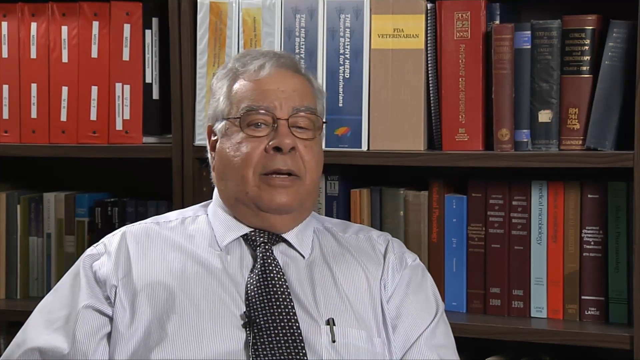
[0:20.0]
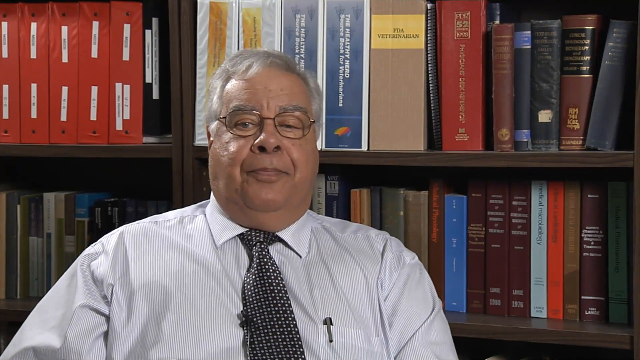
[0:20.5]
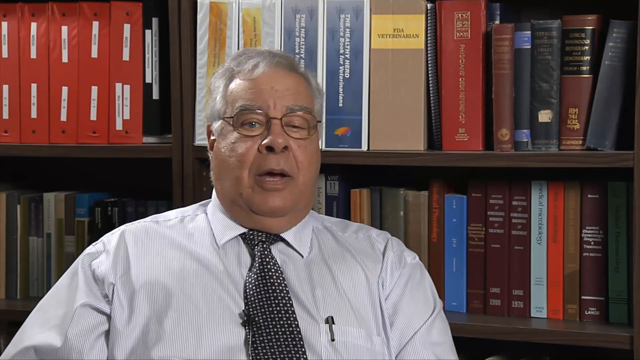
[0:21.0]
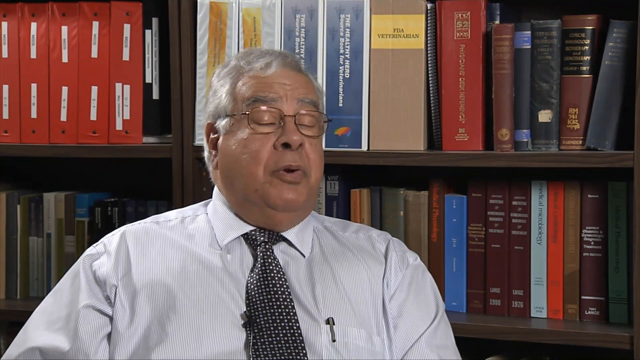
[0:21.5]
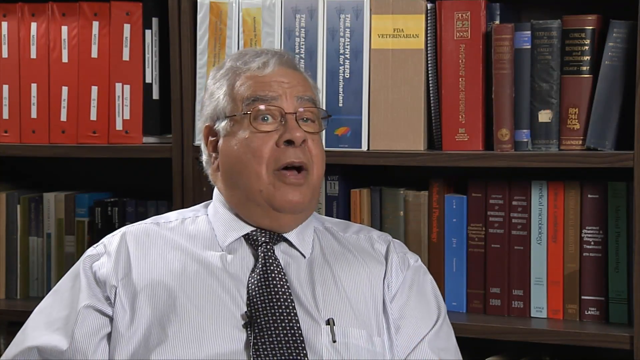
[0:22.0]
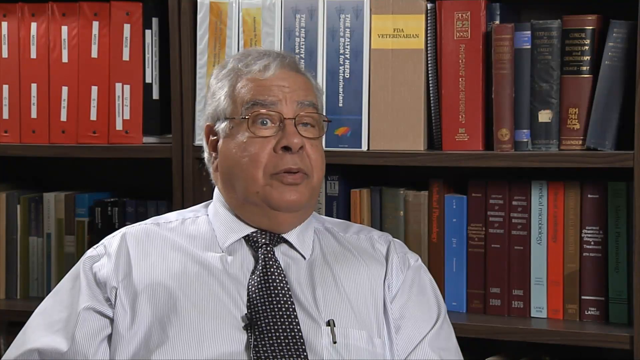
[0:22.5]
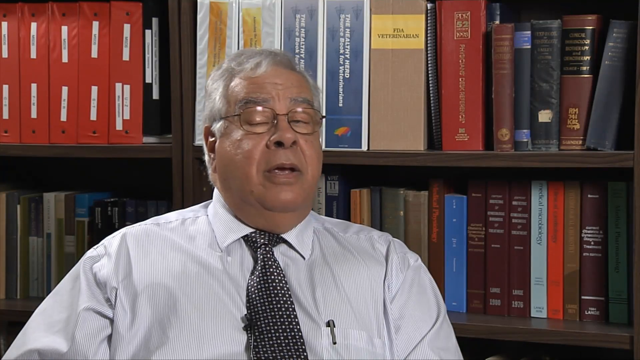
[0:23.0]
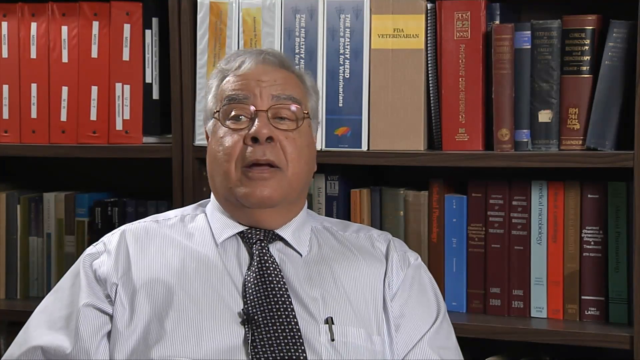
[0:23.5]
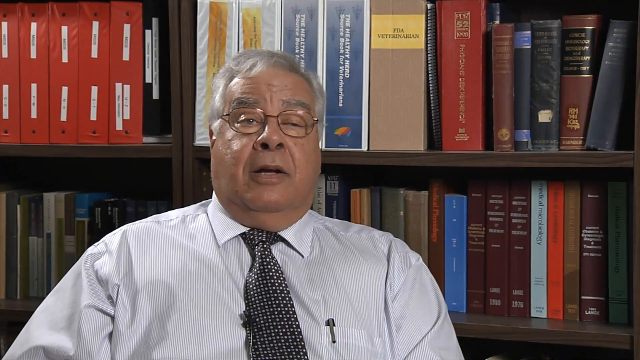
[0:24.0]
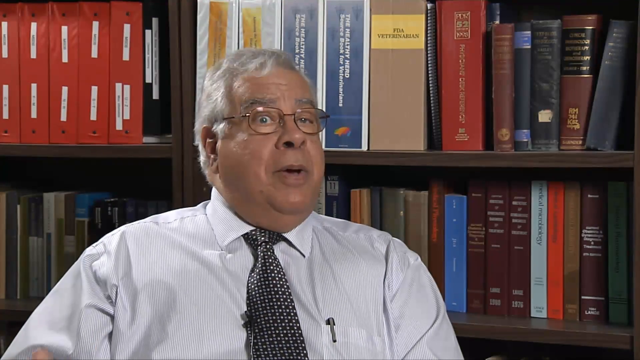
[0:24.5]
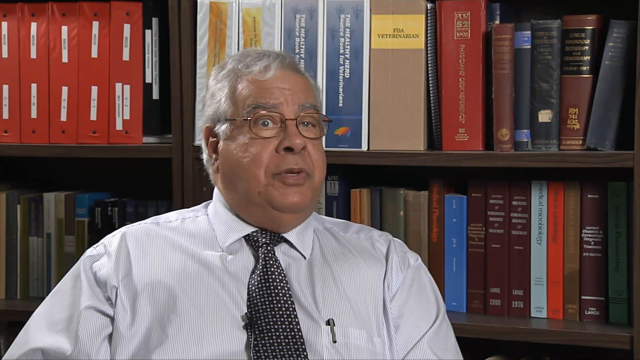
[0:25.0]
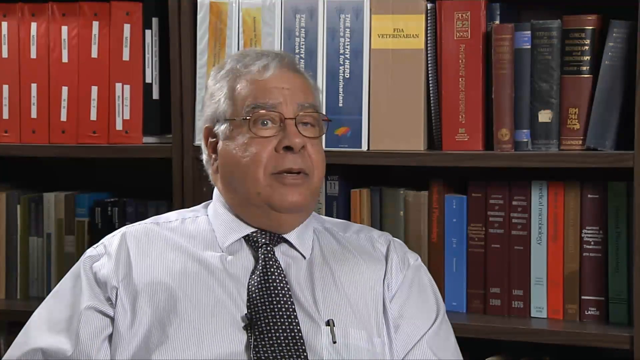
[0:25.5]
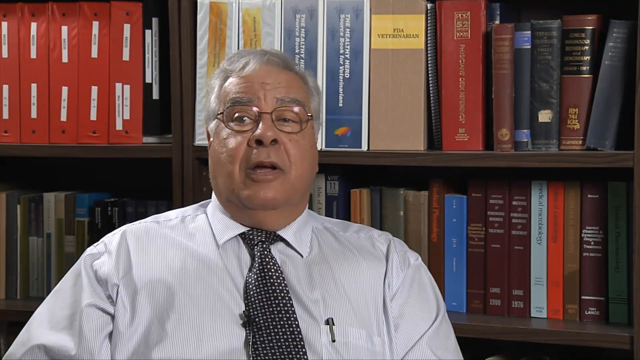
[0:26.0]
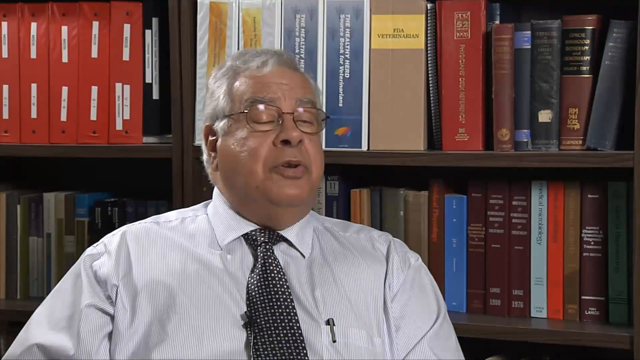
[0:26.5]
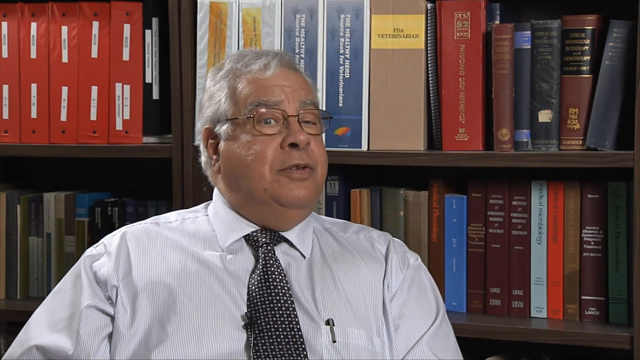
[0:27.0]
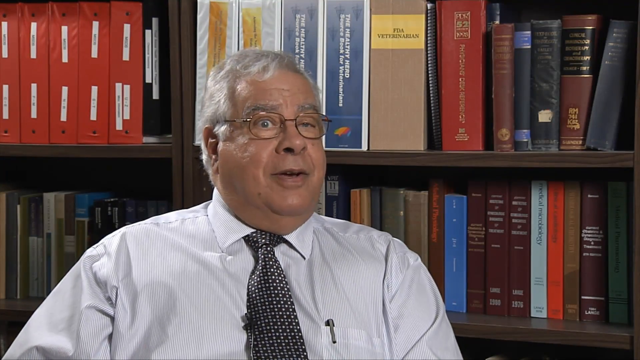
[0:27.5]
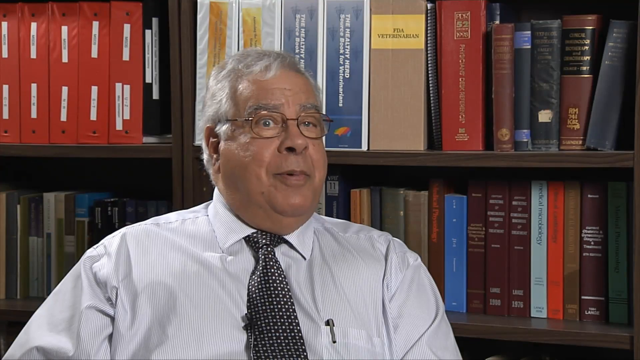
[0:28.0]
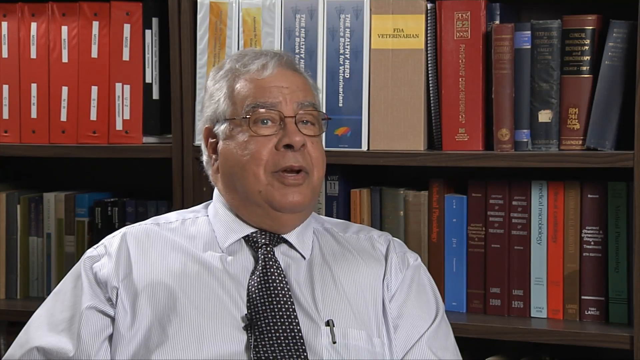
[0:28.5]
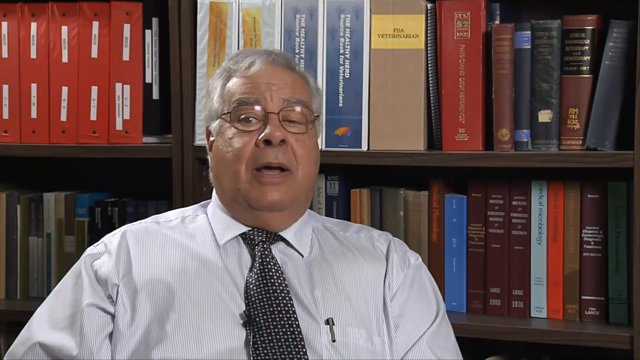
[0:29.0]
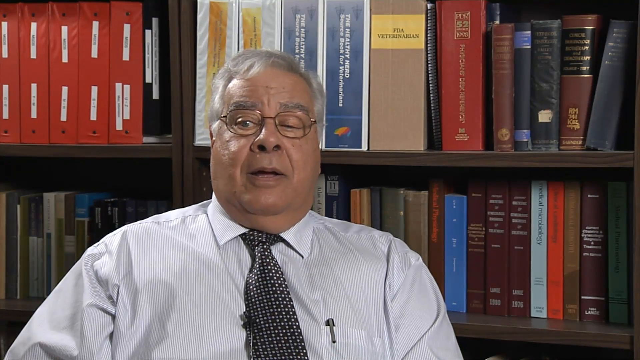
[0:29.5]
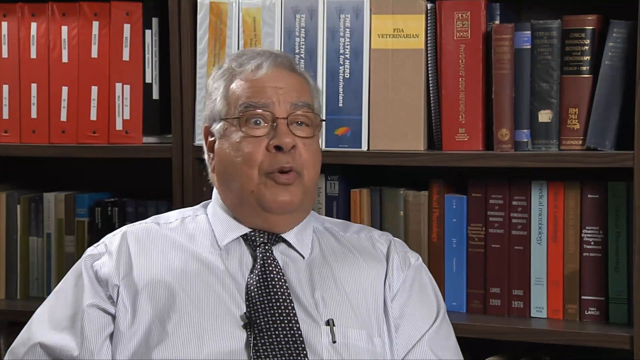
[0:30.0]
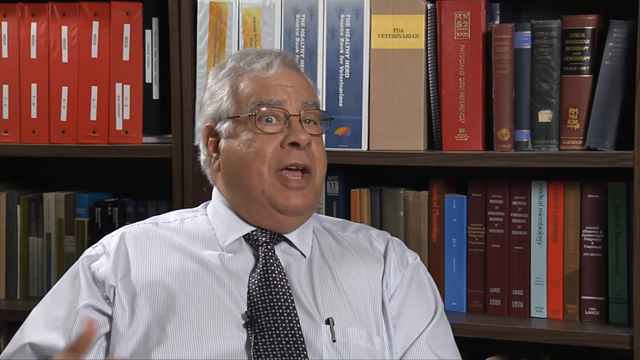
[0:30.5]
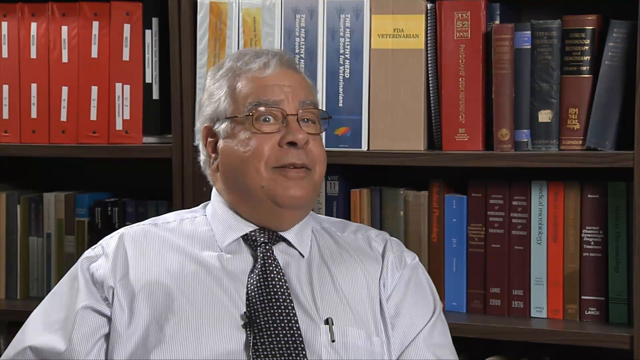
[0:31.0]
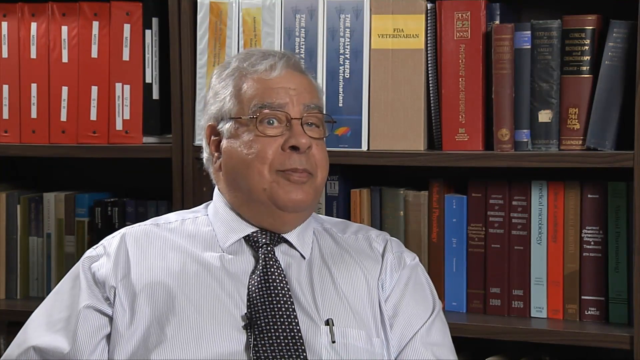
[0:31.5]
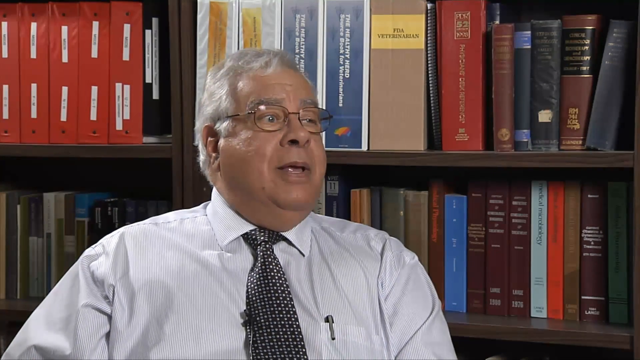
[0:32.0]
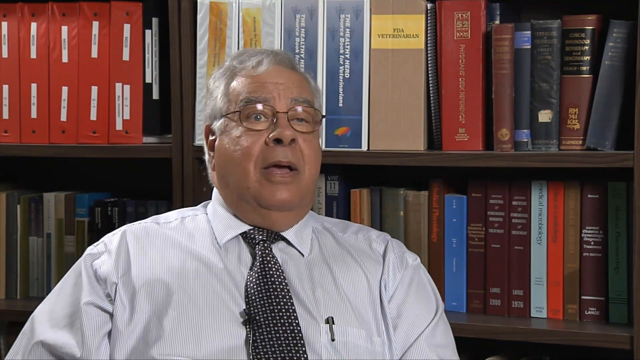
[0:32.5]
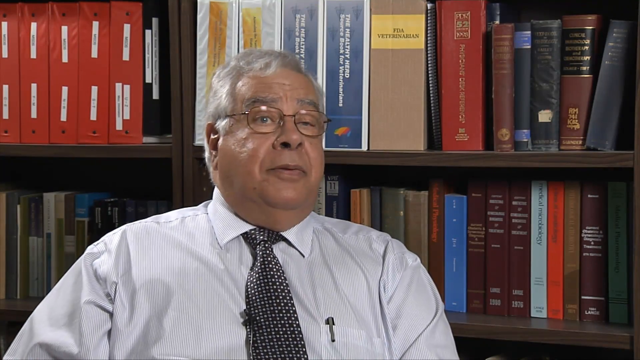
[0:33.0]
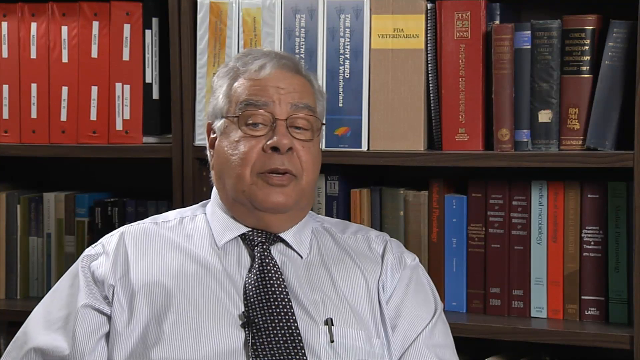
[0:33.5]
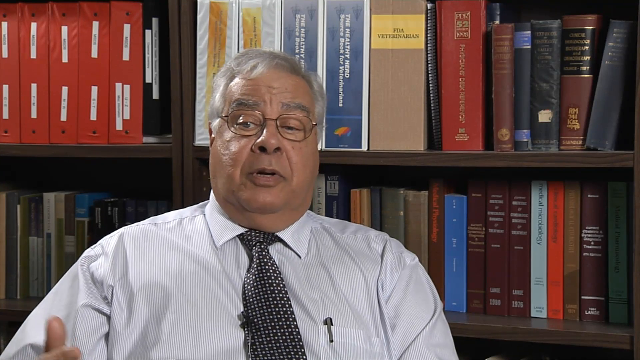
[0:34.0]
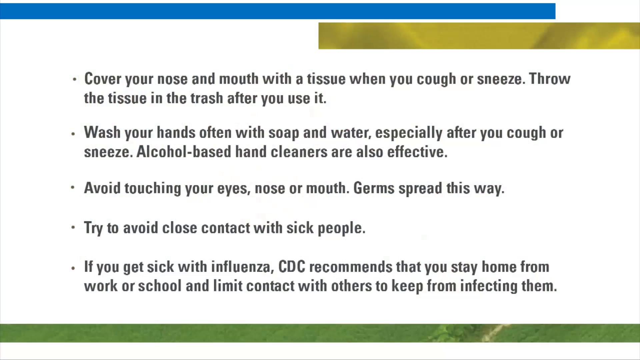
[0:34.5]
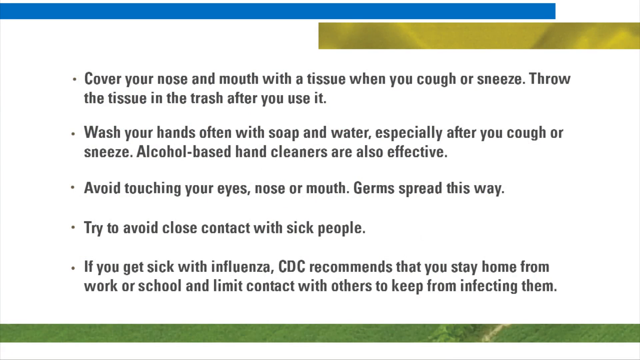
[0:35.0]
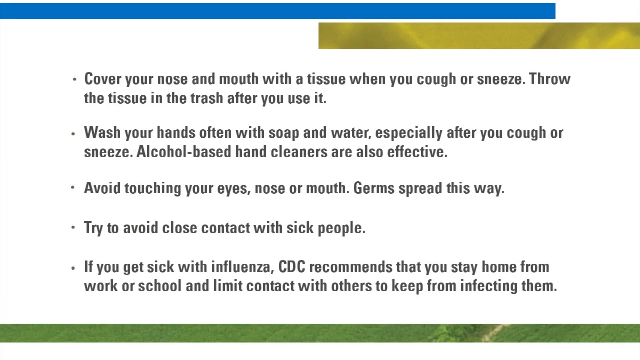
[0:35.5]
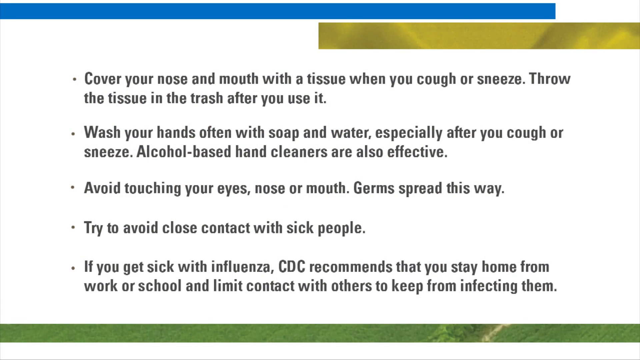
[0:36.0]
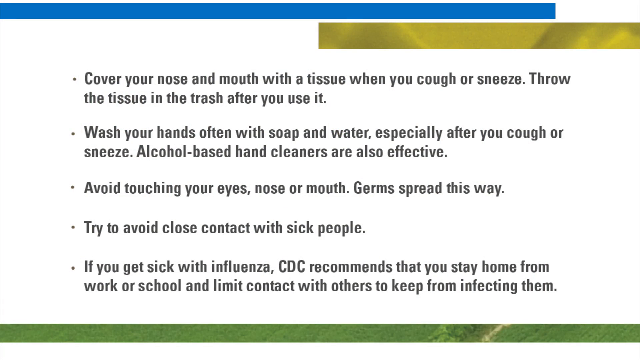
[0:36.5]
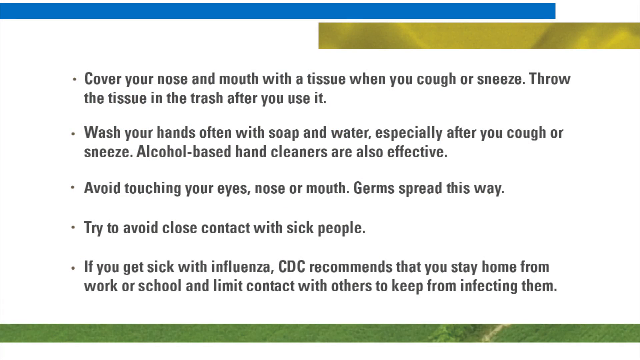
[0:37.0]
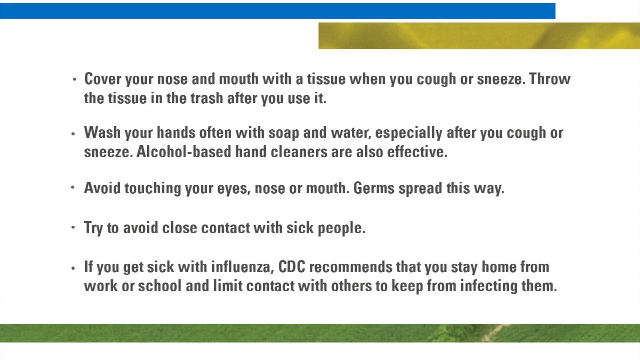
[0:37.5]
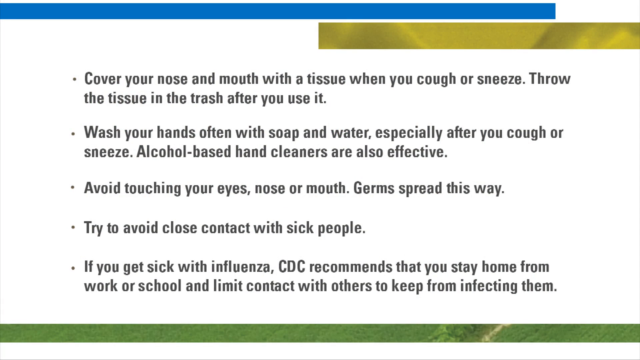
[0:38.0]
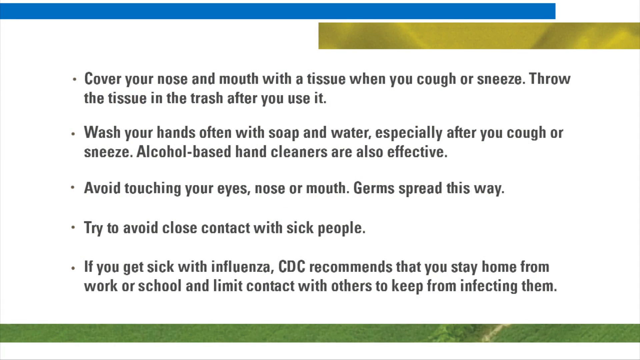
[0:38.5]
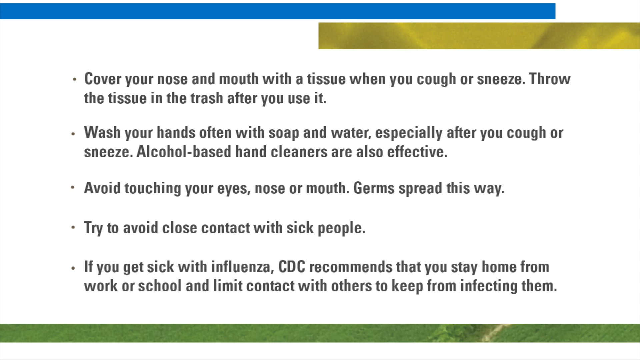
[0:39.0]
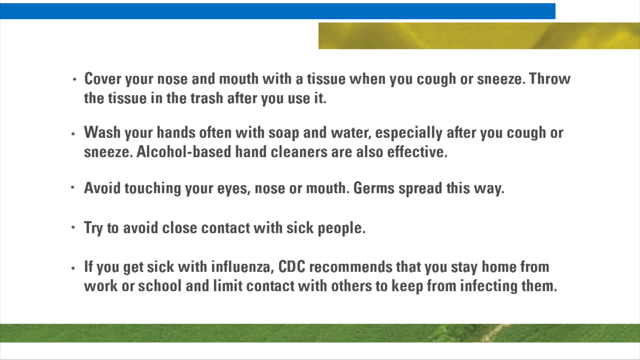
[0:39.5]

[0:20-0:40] The same man sits at the same desk being interviewed, wearing glasses and a white long-sleeve shirt. The backdrop looks like a library or his office, with medical books behind him. A slide with bullet points appears, titled "preventing the spreading of H1N1 influenza." Its points read: "cover your nose and mouth with the tissue when you cough or sneeze," "throw the tissue in the trash after you use it," "wash your hands with soap and water especially if you cough or sneeze," "alcohol-based hand cleaners are also effective," "avoid touching your eyes nose and mouth, germs spread that way," "try to avoid close contact with sick people," and "if you get sick with influenza CDC recommends that you stay home from work or school and limit contact with others to keep from infecting them."